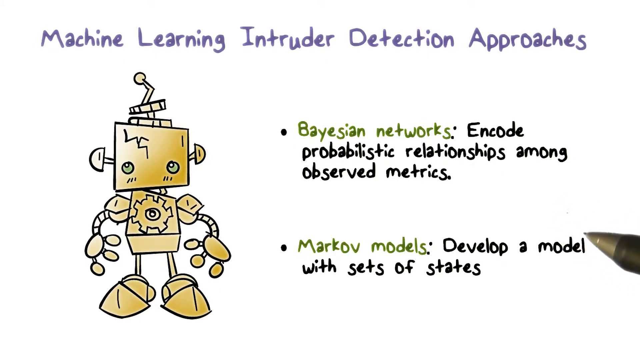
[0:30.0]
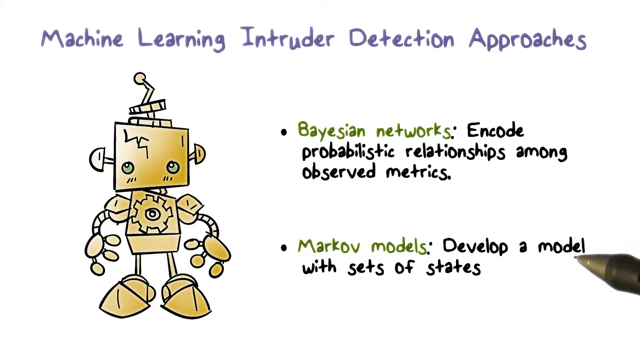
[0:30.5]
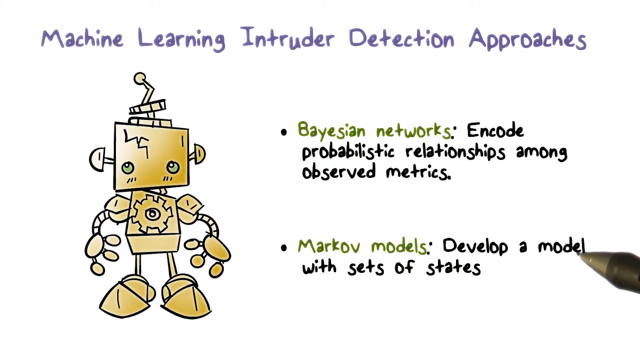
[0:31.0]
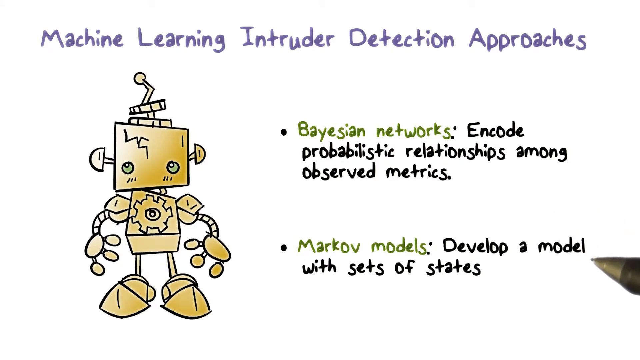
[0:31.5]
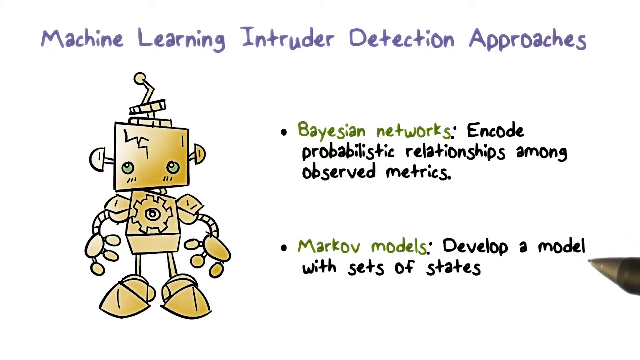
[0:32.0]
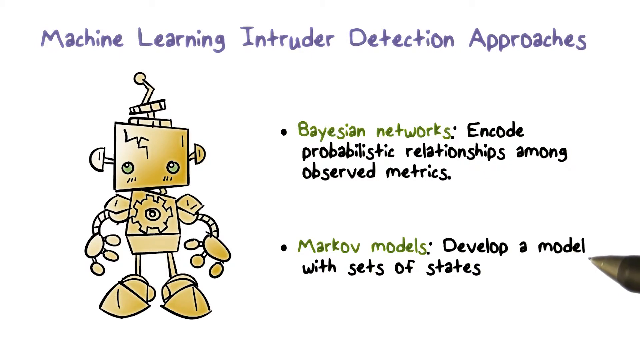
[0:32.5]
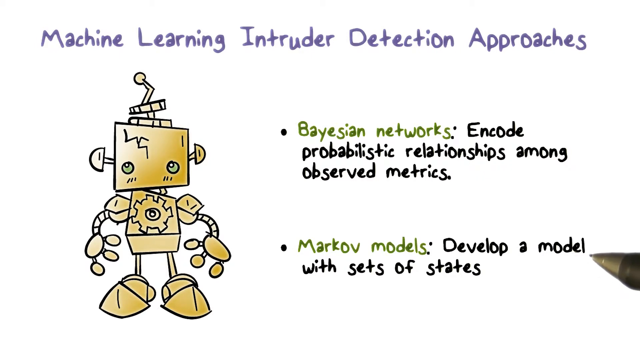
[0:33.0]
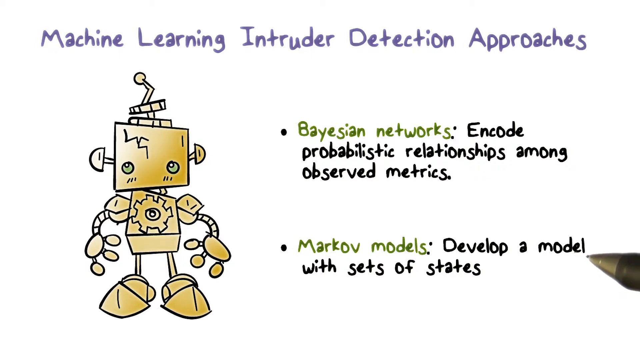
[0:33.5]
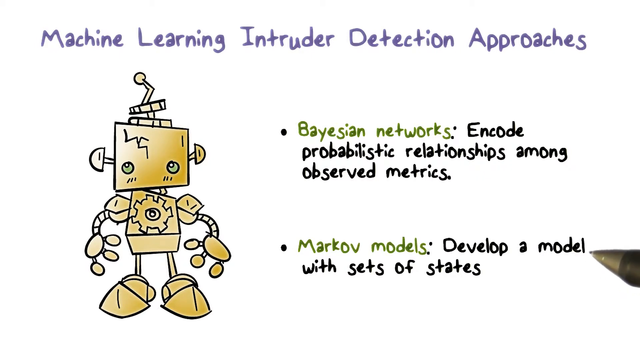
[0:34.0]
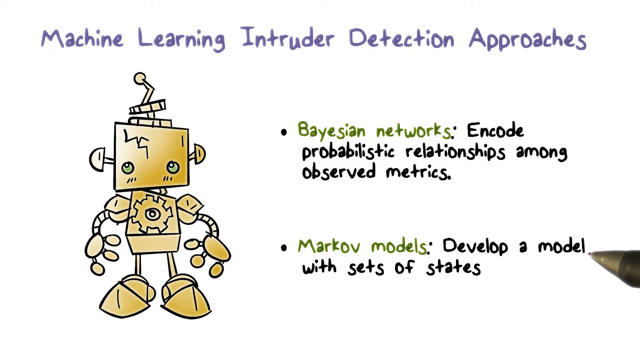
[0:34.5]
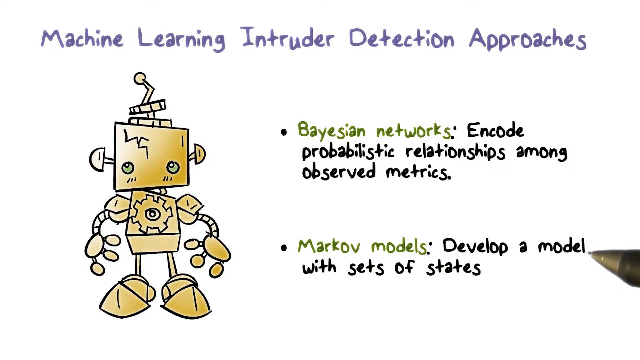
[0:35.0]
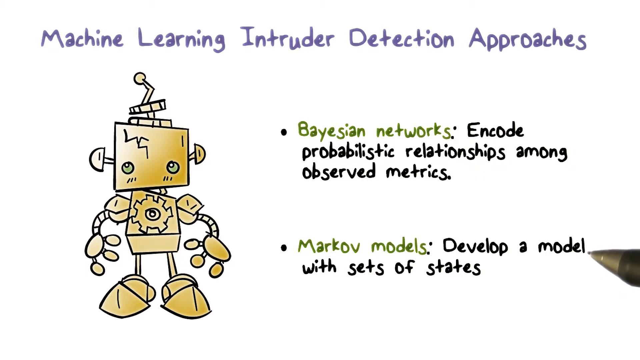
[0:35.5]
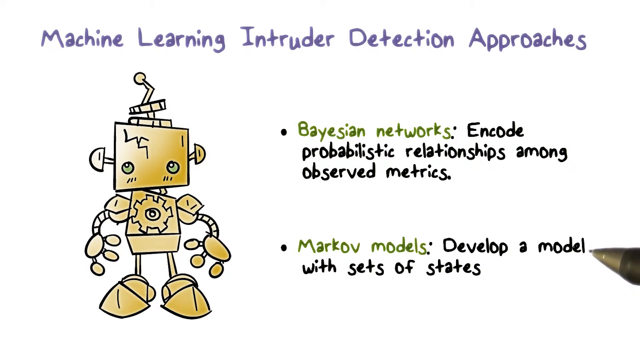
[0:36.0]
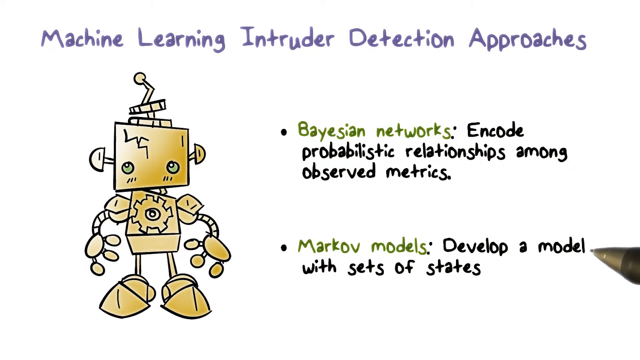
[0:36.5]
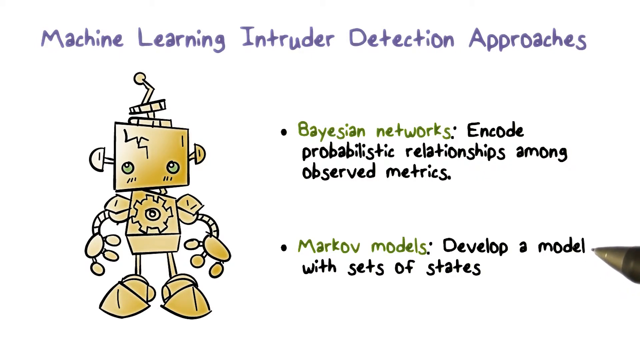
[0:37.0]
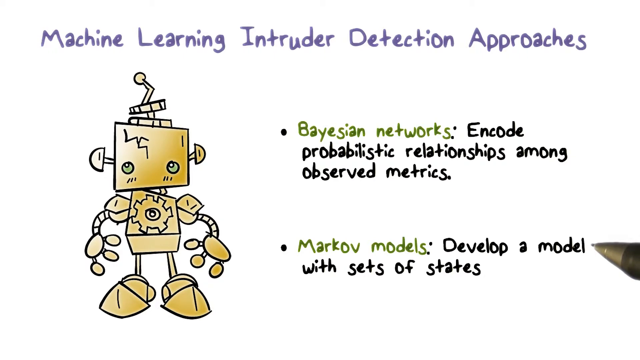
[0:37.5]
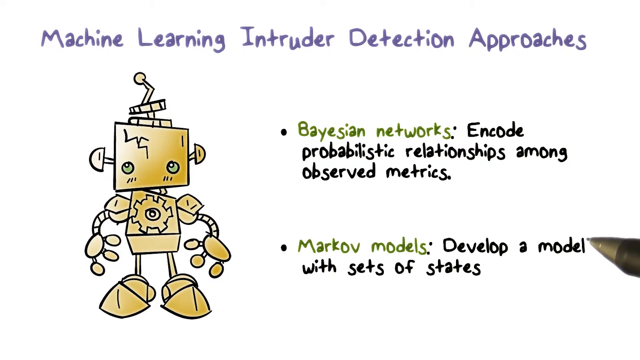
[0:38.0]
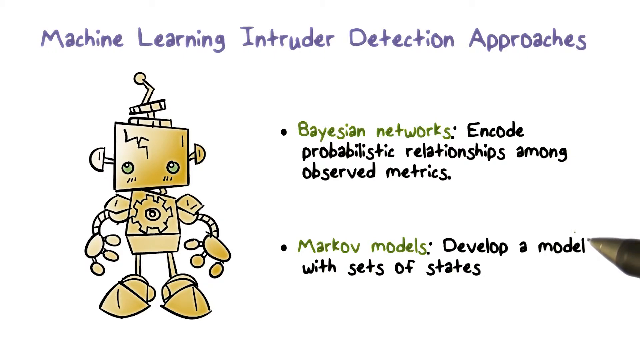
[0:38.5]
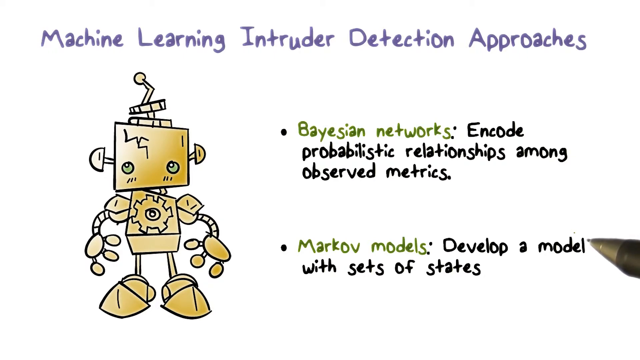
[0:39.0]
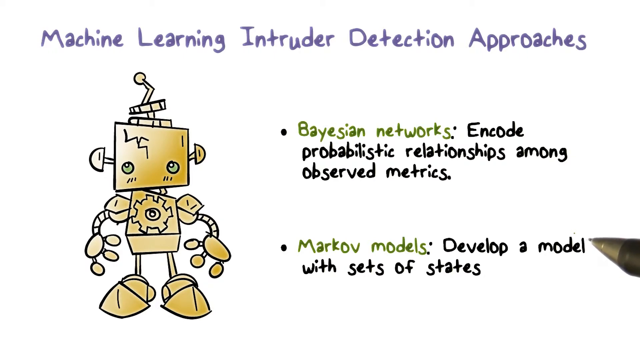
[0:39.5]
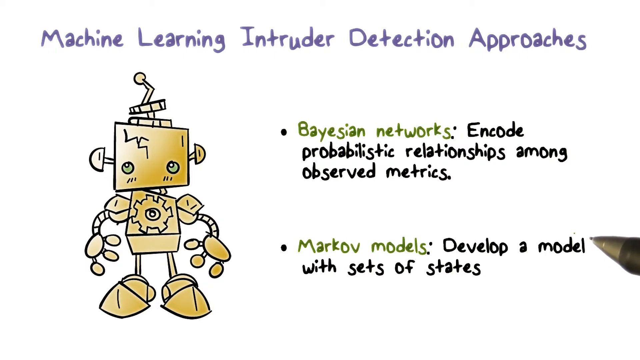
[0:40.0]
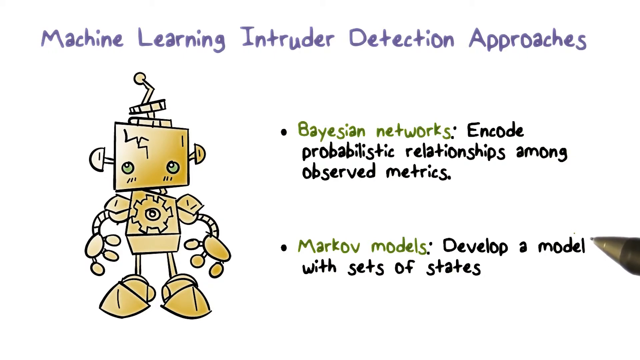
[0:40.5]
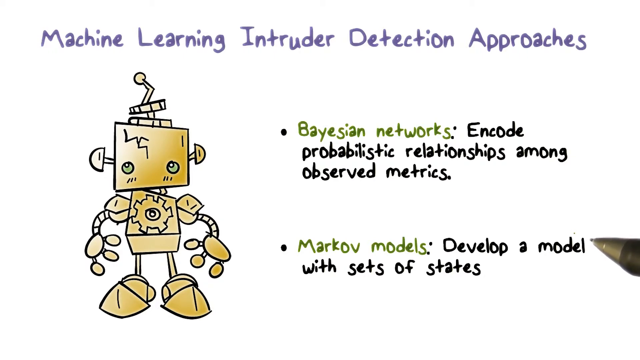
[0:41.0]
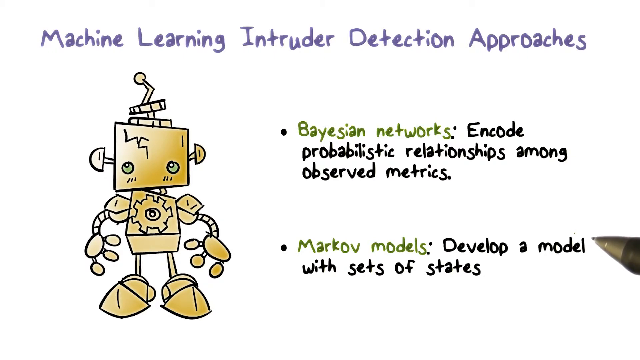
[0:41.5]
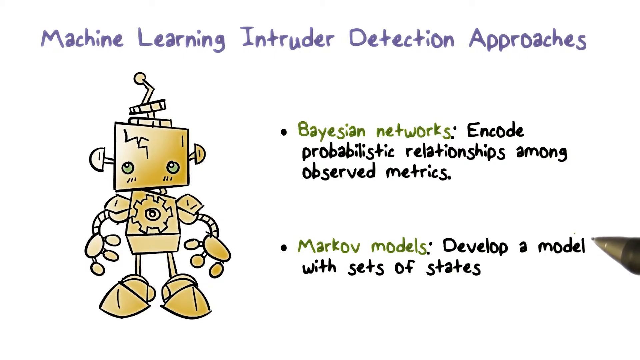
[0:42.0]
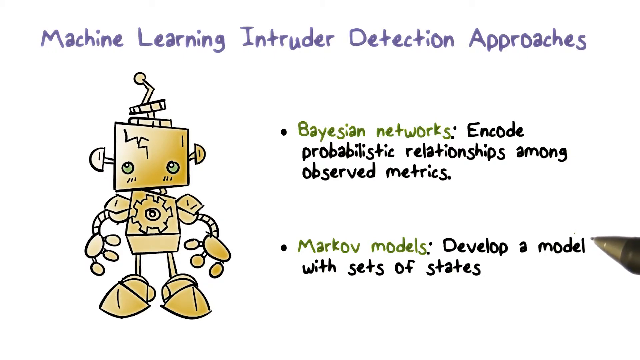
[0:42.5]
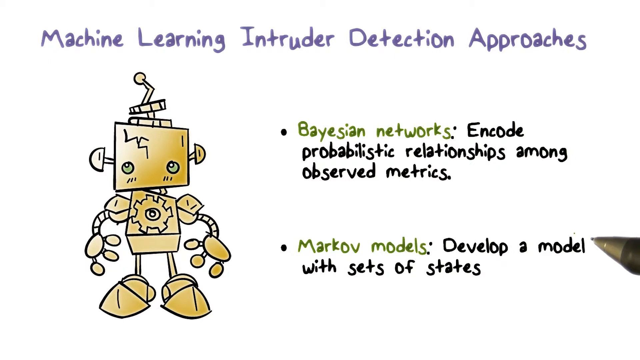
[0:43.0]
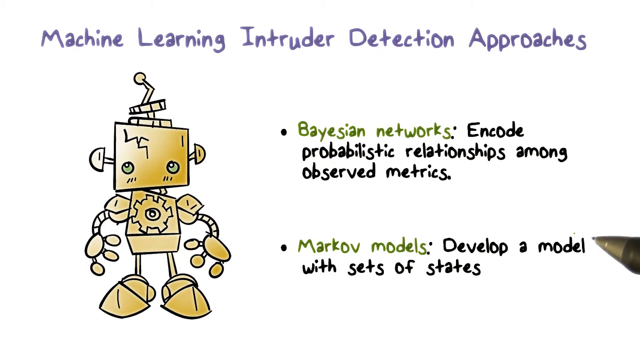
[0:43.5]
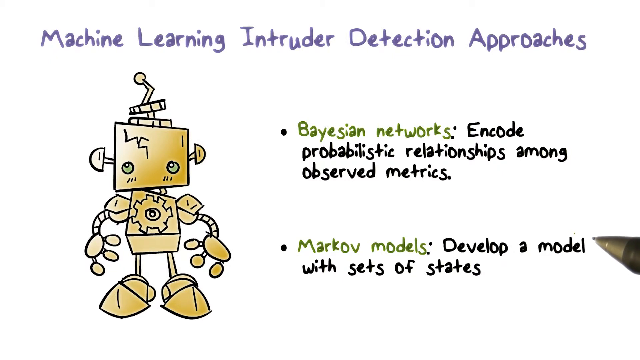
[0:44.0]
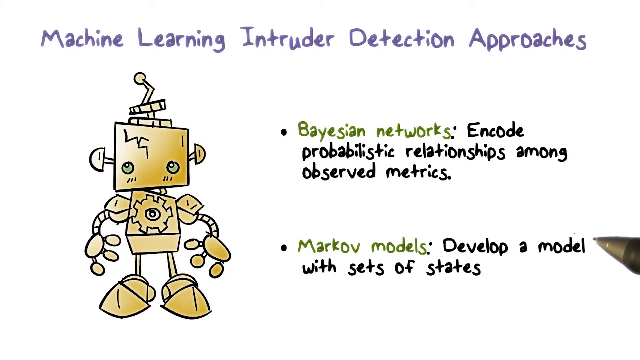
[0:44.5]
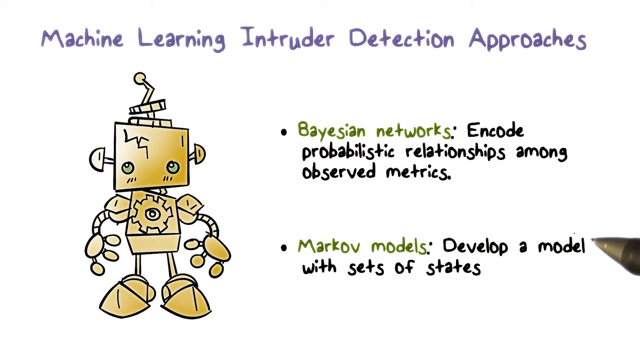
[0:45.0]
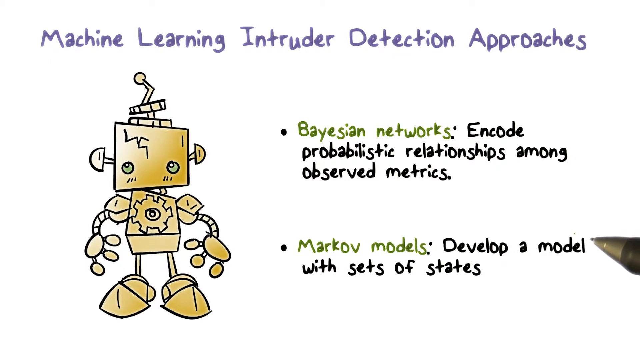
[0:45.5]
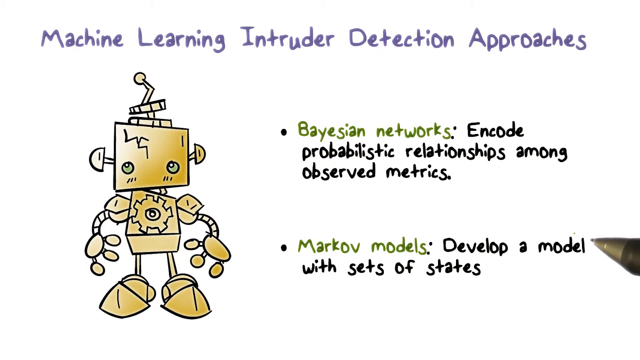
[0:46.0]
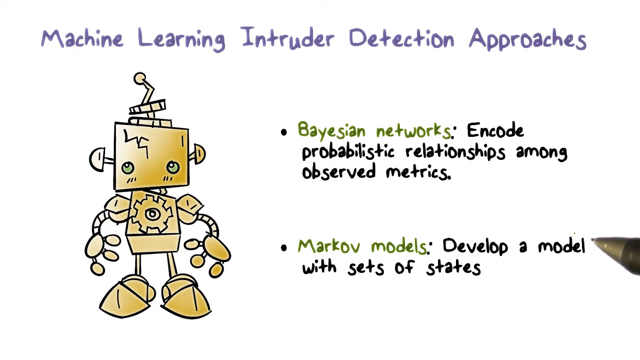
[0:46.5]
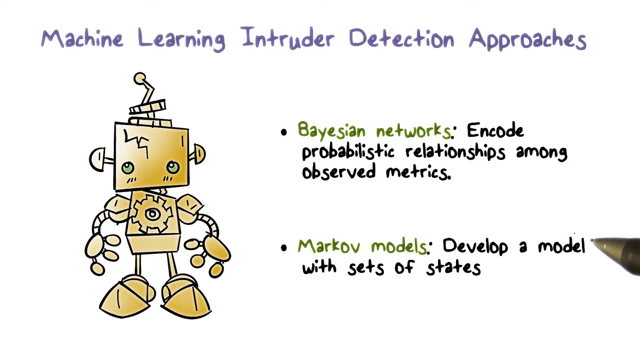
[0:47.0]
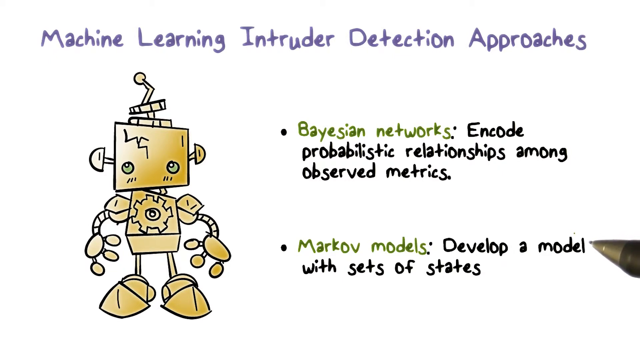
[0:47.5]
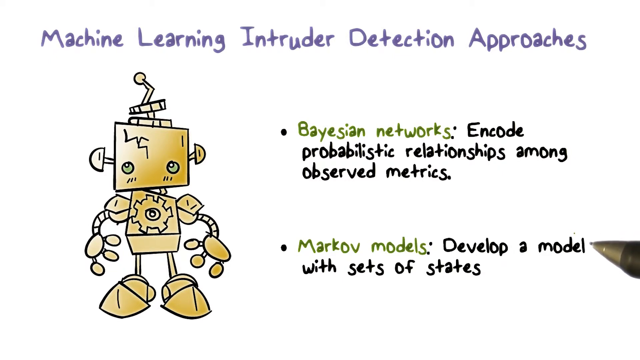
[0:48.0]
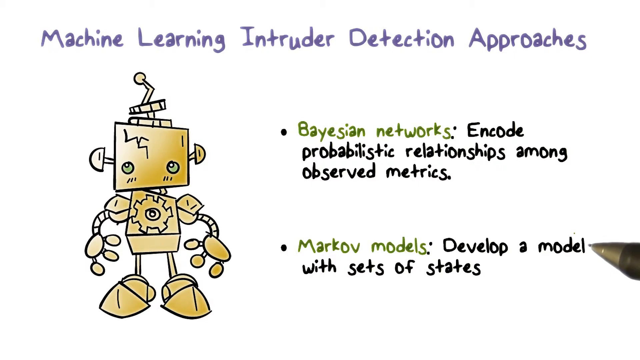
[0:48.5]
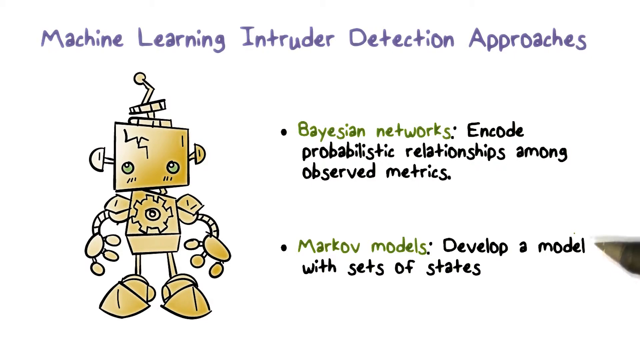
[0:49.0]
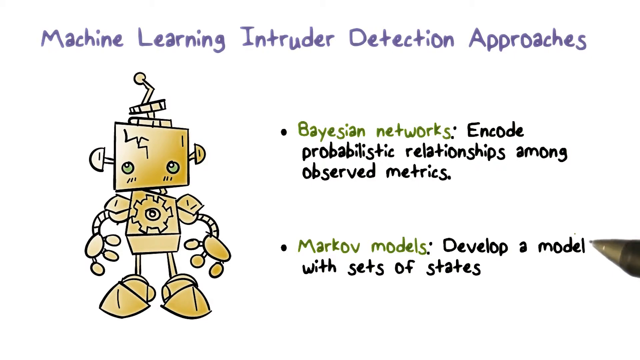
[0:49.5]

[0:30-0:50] On the paper with the gold character, the pencil writing from the right side of the page points toward the word "model" in the second bullet, moving slightly up and down. The words and sentences remain. "Biasion networks" is in green, the heading of the second bullet is in green, and "machine learning intruder detection approaches" is in purple. The gold character on the left has round eyes that are slightly green inside. His body is gold, made of multiple items put together to make him look human. He is a cartoon and does not move. On his right lower corner, a line divides the box in half, separating the light gold from the darker gold. His body is a mixture of dark gold and light gold, which continues down to his arms; the arms have lines around them, with ovals where his hands would be and three ovals for his fingers.